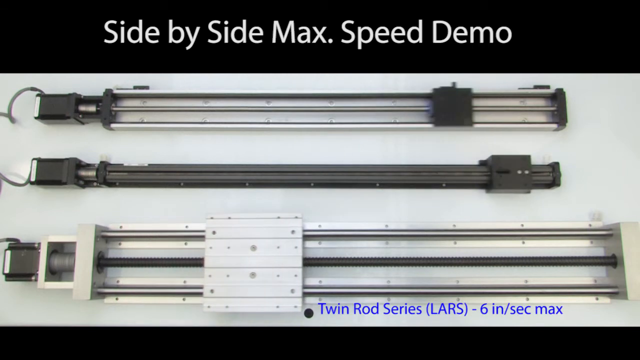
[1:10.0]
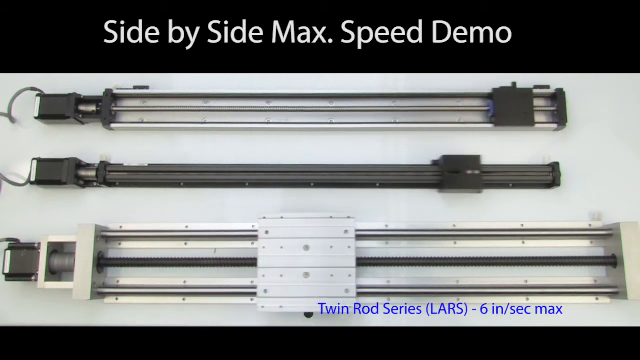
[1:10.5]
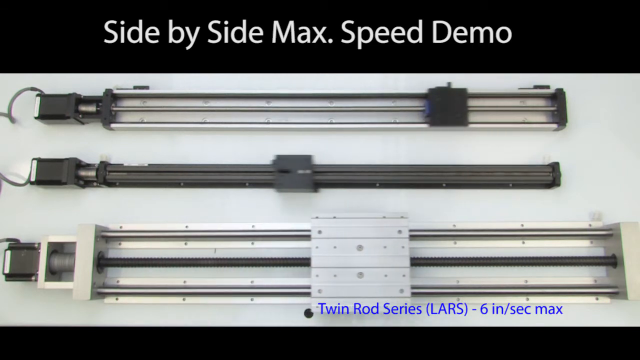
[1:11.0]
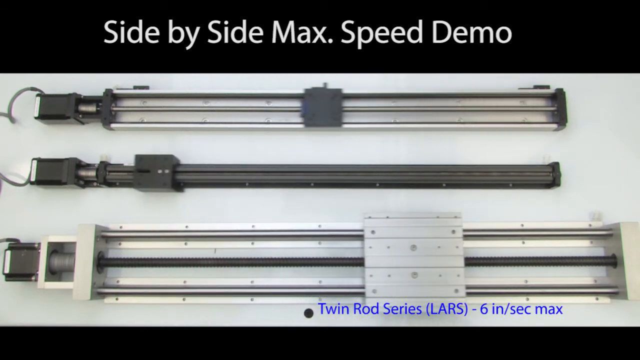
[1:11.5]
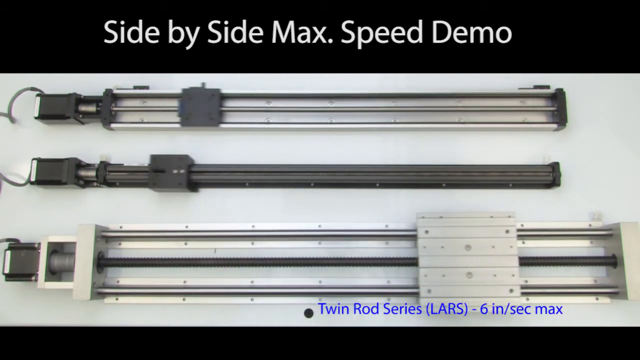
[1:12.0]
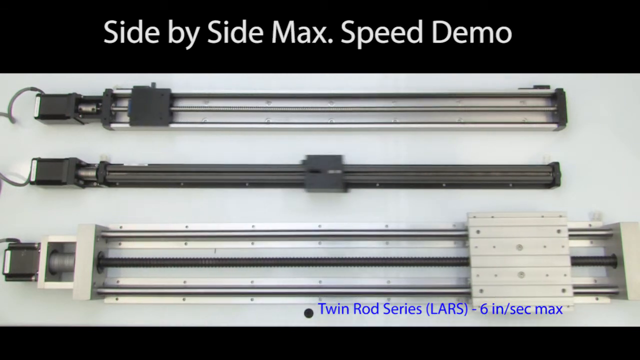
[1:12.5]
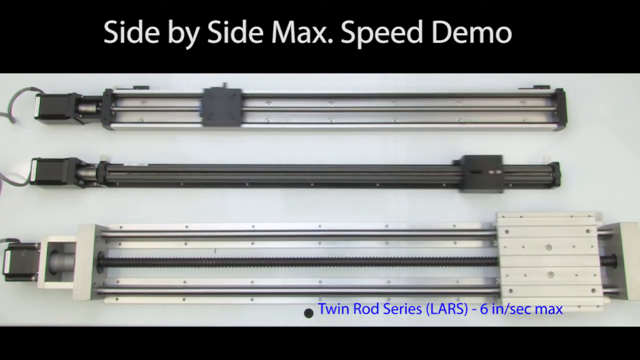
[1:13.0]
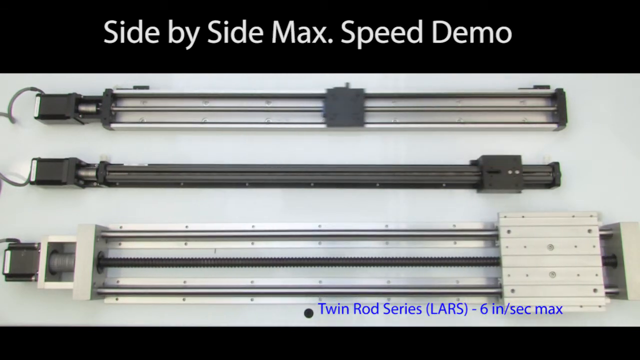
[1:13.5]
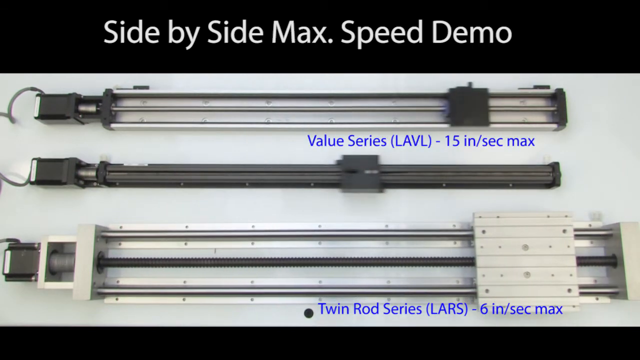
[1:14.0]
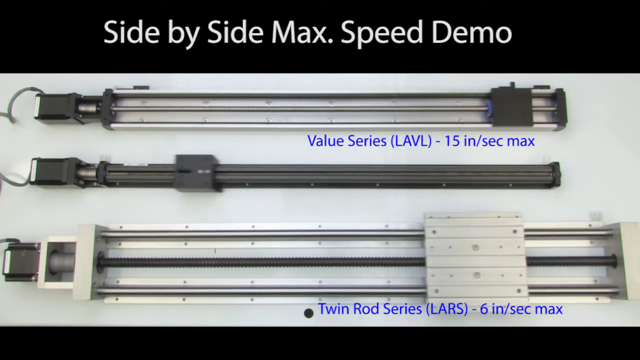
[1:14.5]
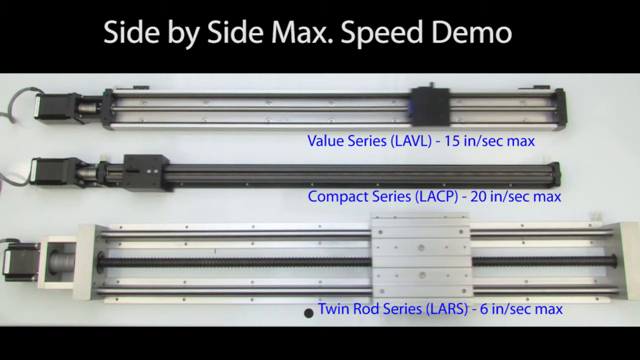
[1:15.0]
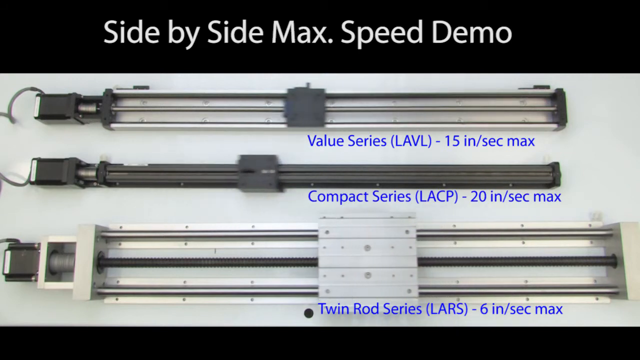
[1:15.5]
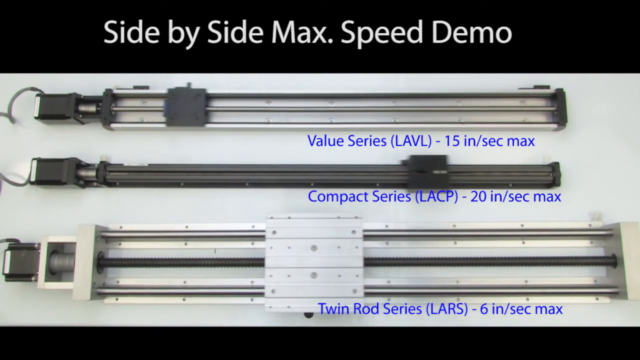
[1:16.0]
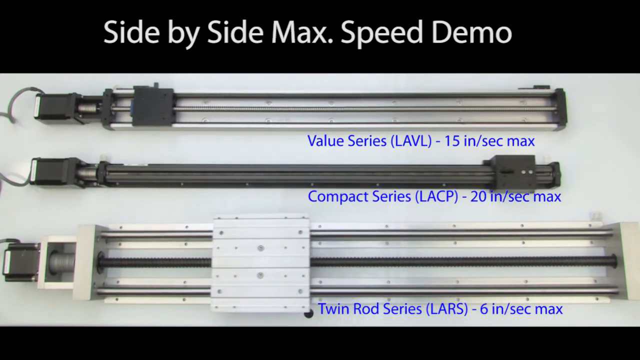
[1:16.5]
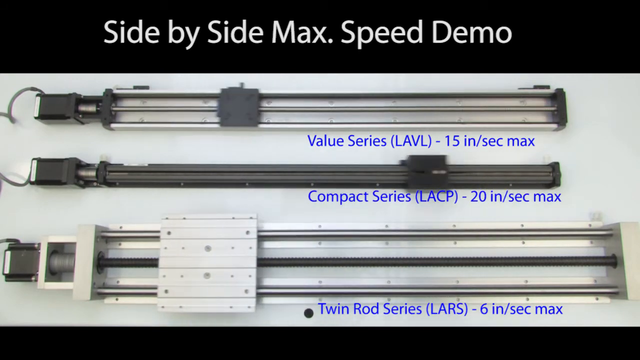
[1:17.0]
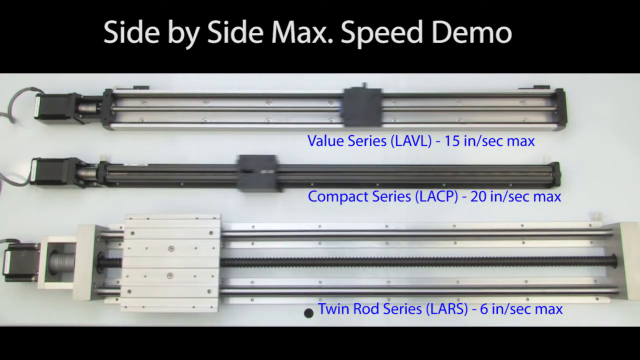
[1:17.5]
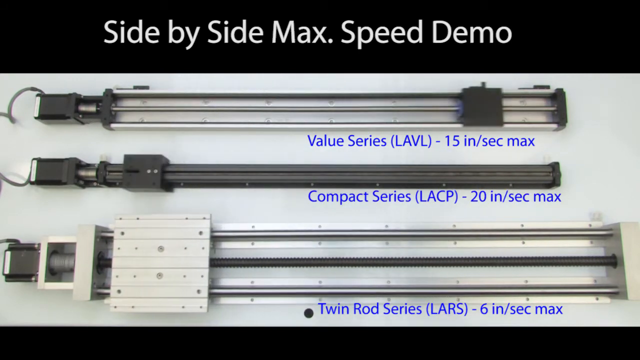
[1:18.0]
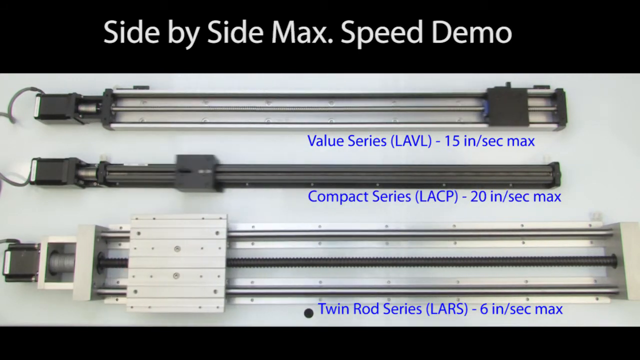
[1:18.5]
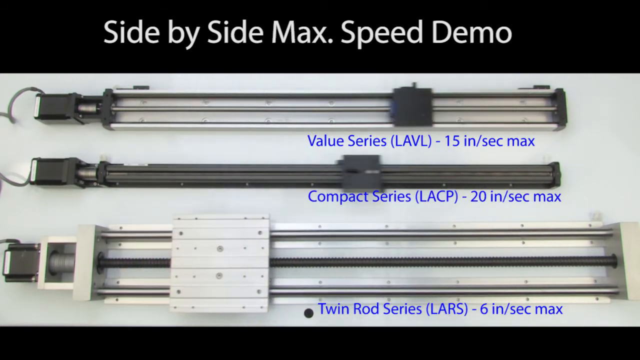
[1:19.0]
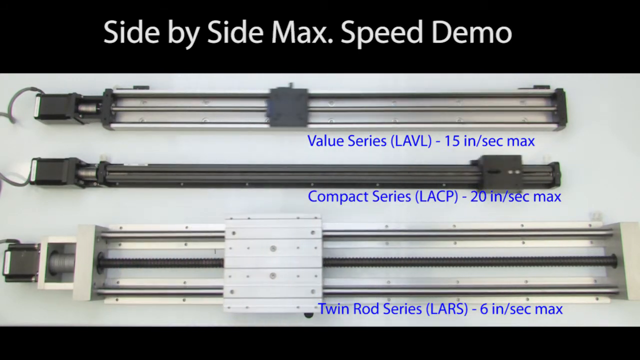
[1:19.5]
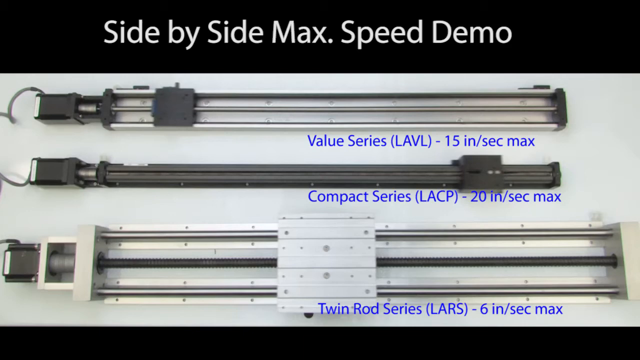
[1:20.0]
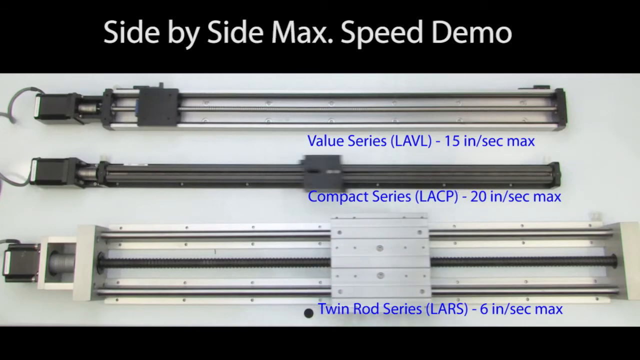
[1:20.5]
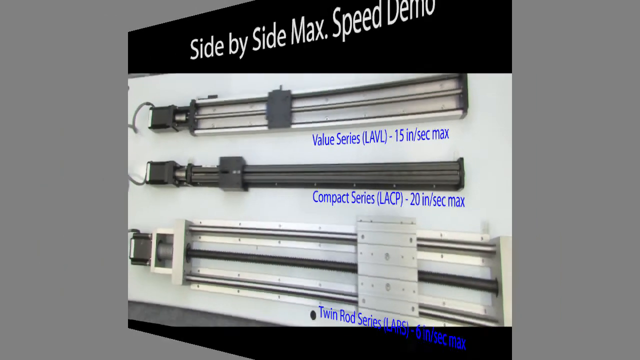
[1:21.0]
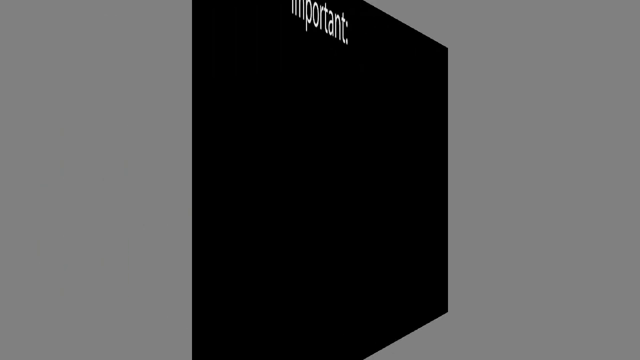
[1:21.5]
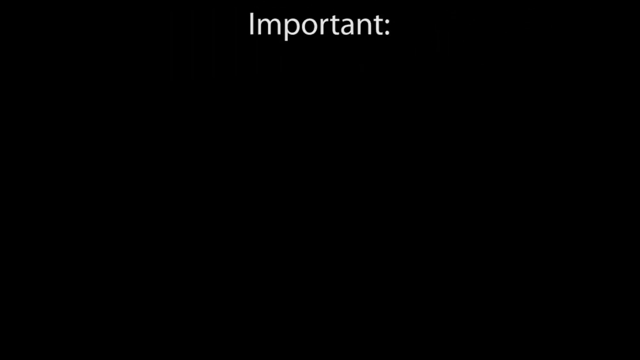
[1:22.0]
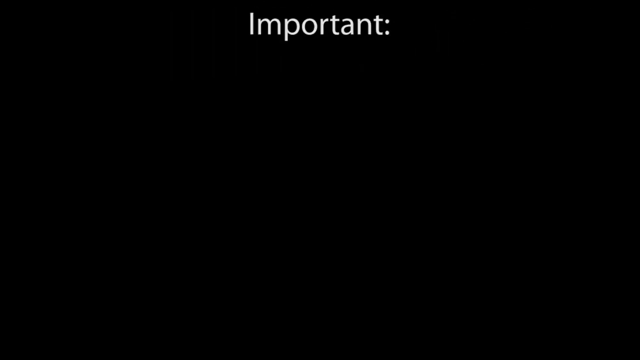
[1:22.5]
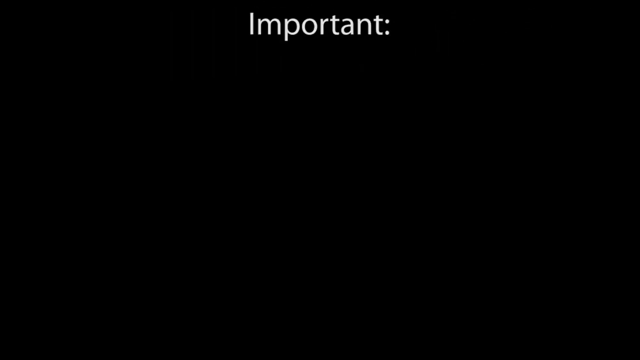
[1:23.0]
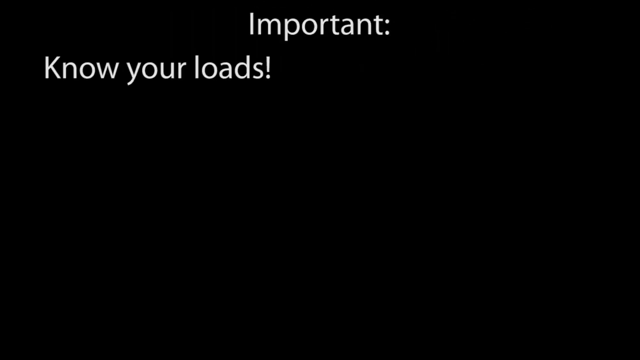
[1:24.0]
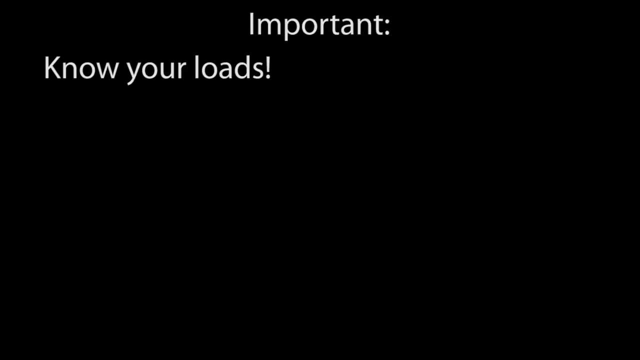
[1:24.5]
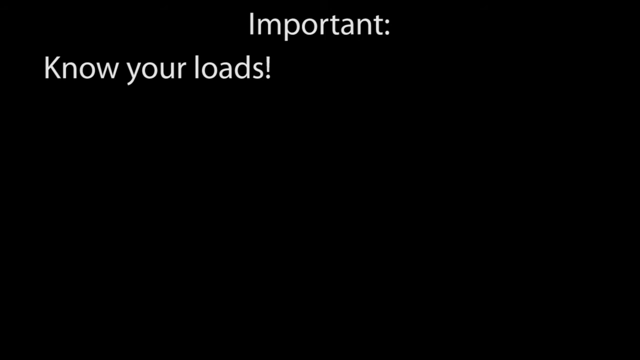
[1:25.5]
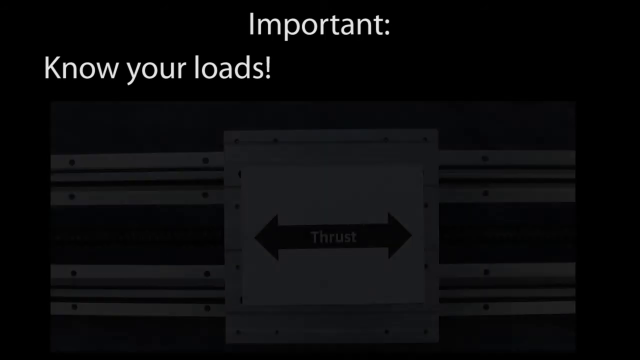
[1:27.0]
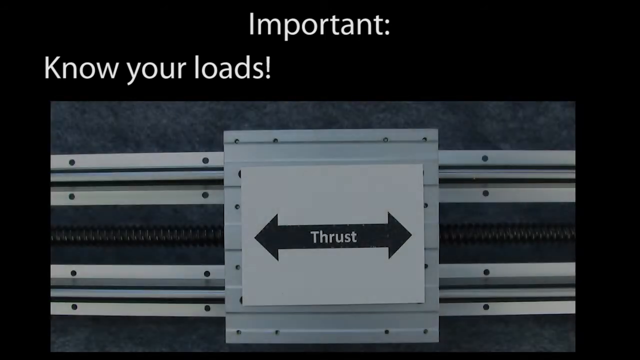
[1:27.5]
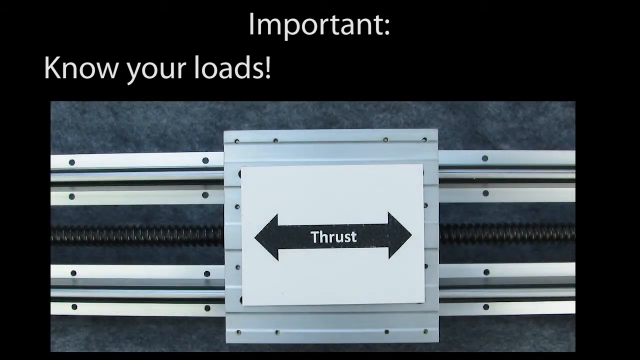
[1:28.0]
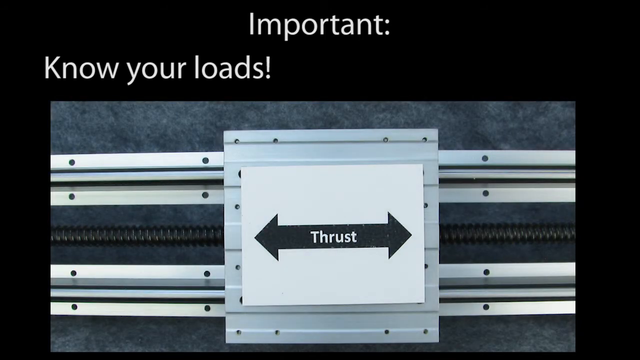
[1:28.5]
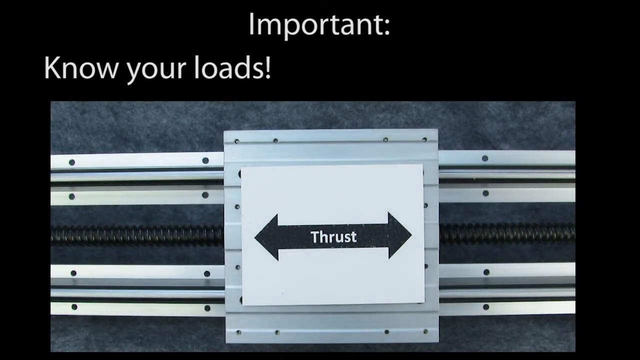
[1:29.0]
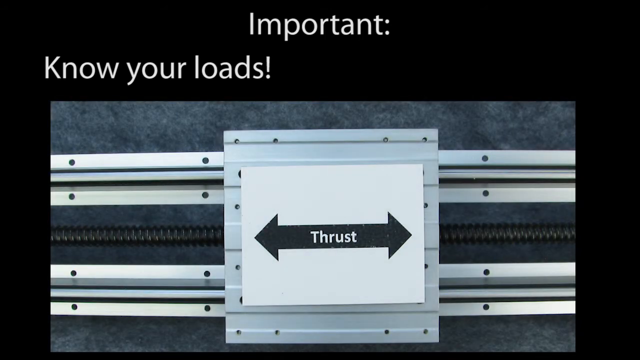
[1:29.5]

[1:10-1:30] Two rows of linear slides are shown on screen, with parts sliding up and down on them. Text reads "important, know your load". Another word reads "thrust", with two arrows pointing in opposite directions.